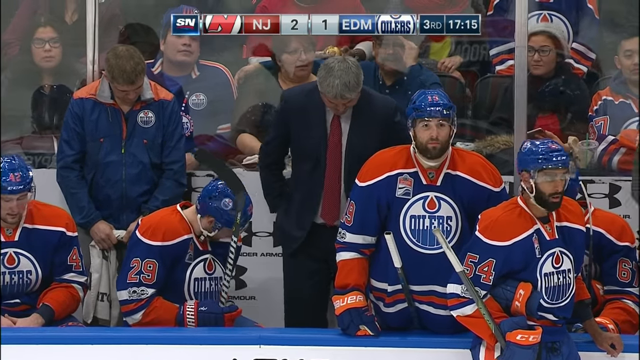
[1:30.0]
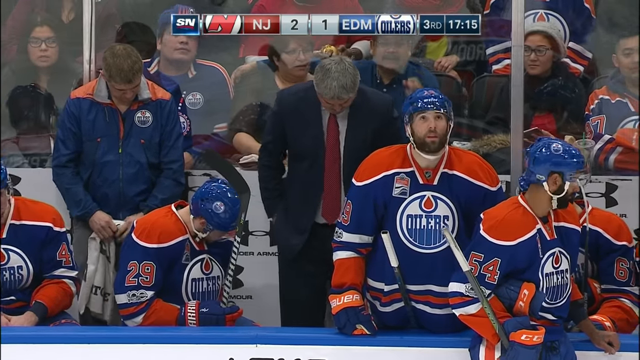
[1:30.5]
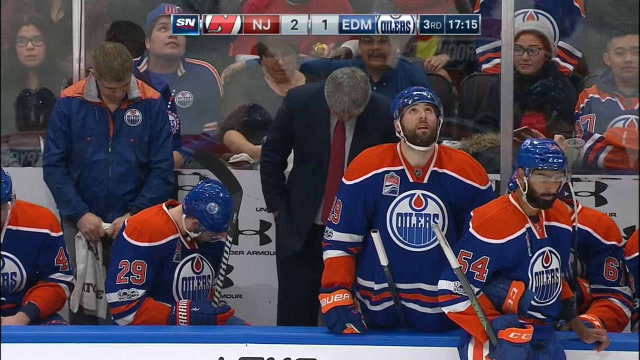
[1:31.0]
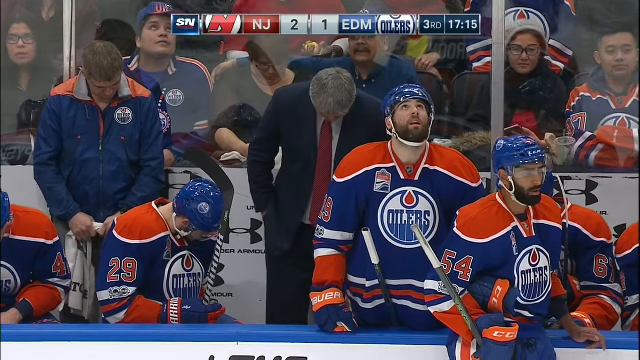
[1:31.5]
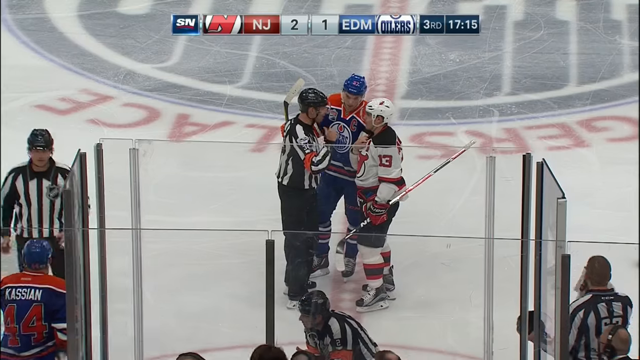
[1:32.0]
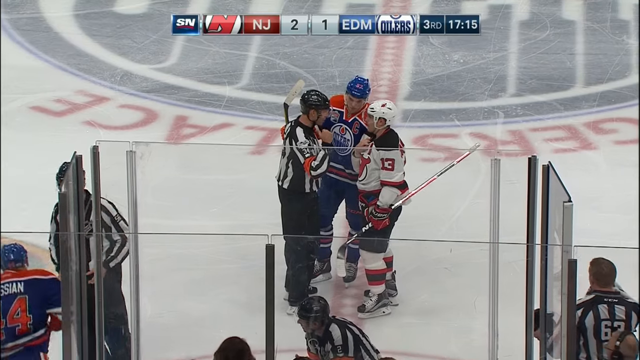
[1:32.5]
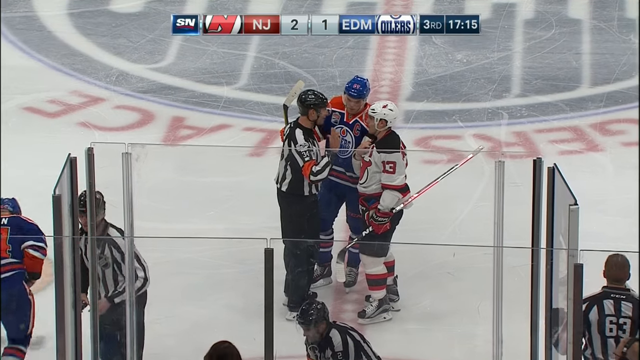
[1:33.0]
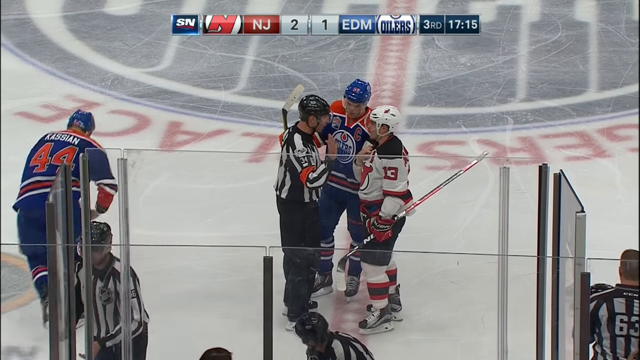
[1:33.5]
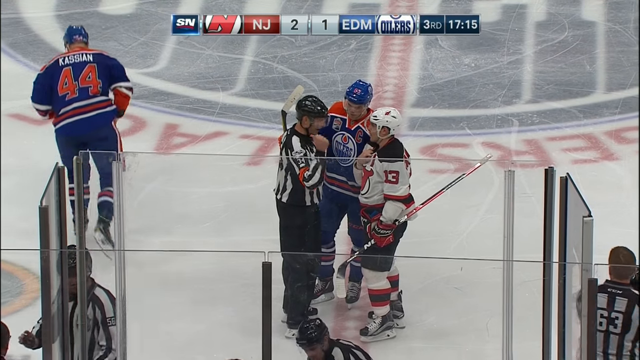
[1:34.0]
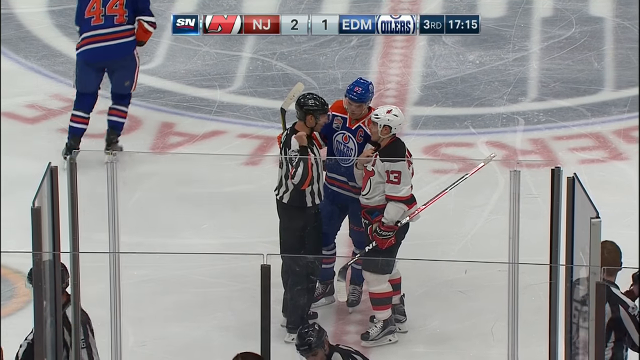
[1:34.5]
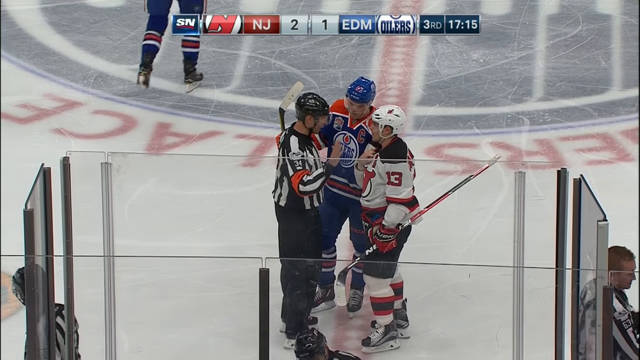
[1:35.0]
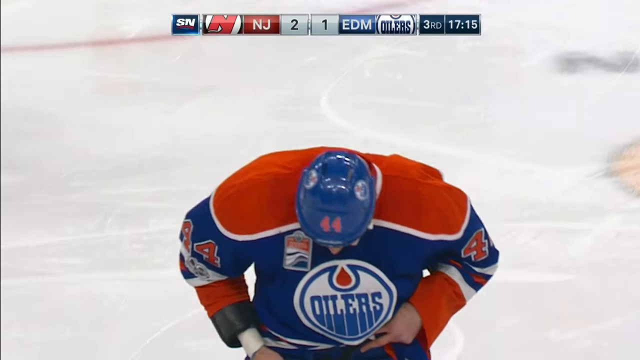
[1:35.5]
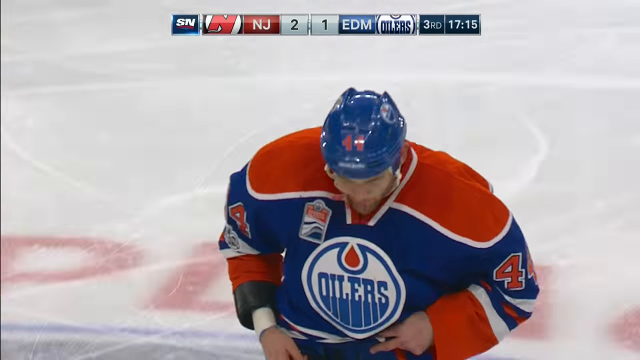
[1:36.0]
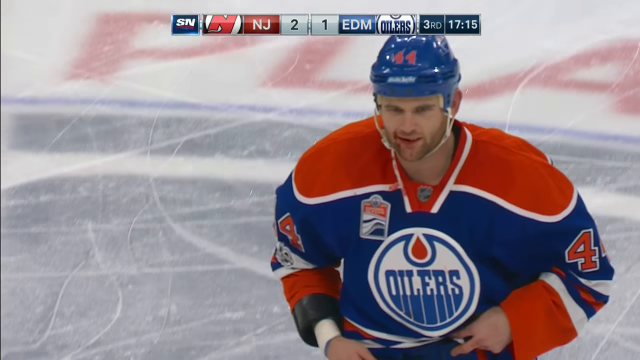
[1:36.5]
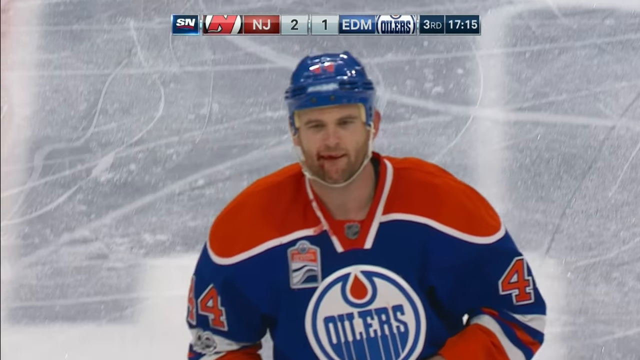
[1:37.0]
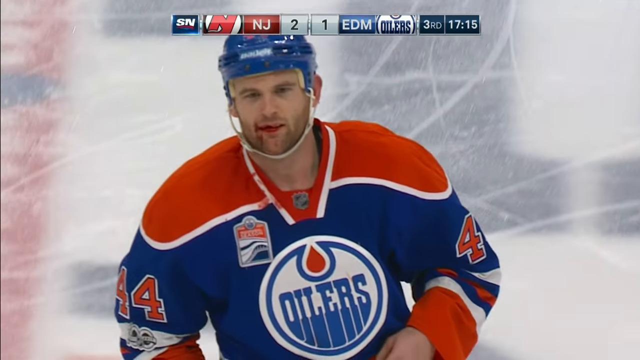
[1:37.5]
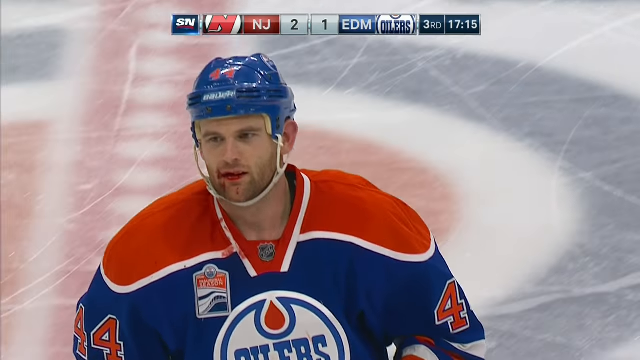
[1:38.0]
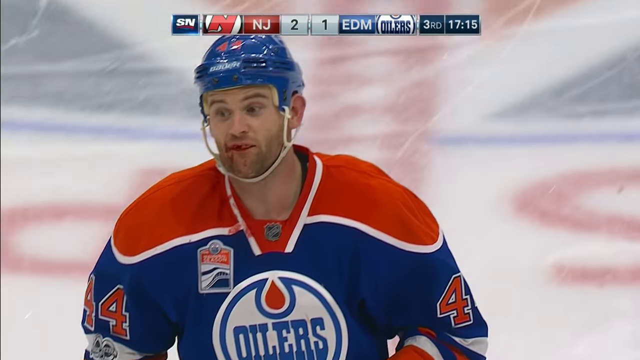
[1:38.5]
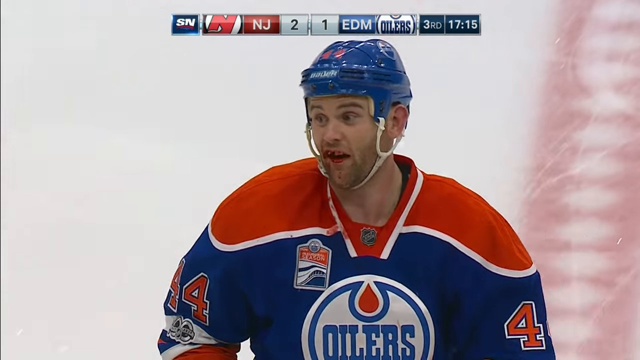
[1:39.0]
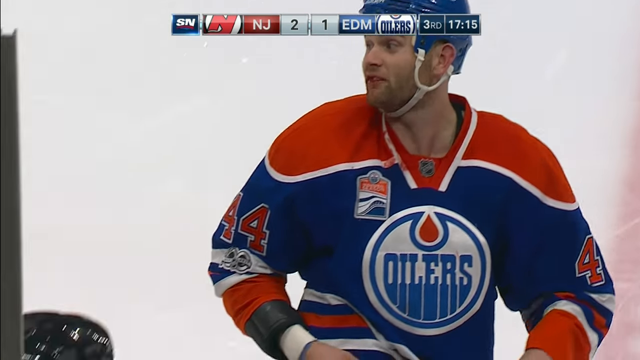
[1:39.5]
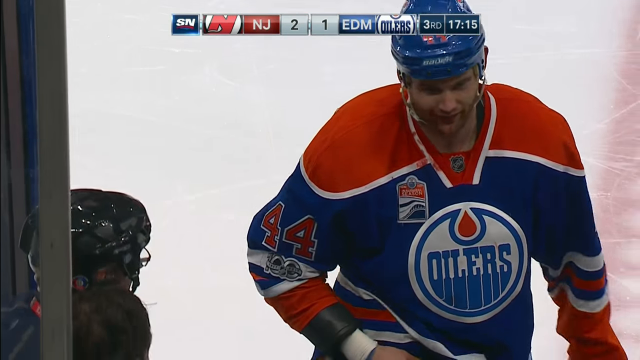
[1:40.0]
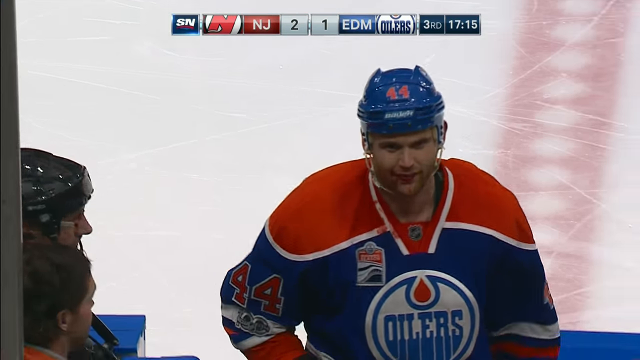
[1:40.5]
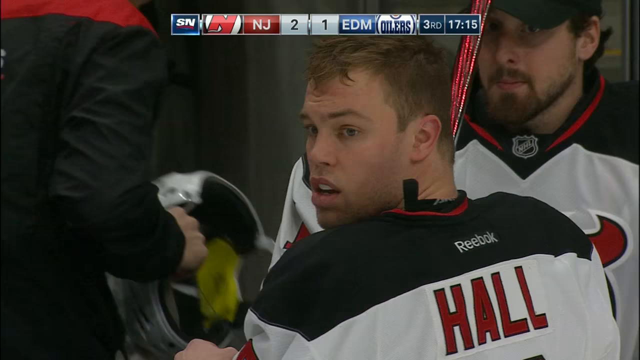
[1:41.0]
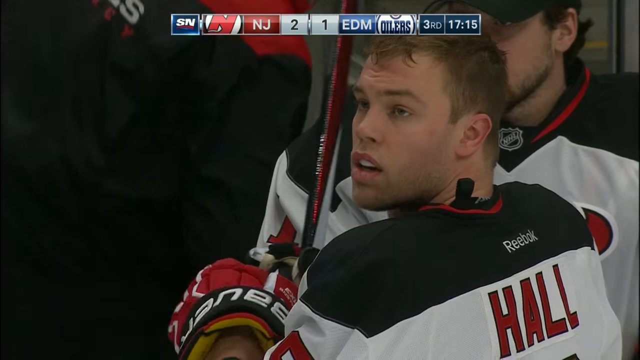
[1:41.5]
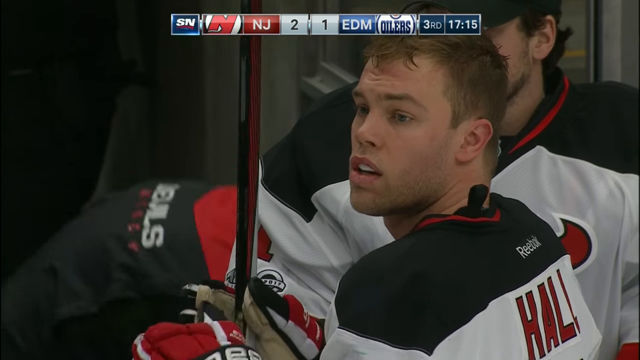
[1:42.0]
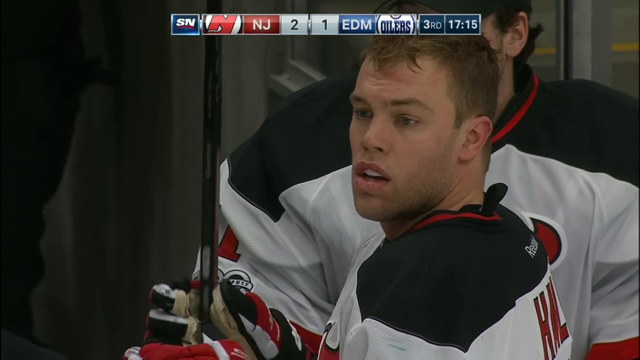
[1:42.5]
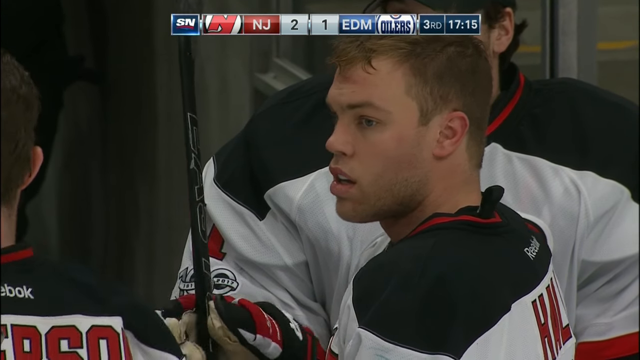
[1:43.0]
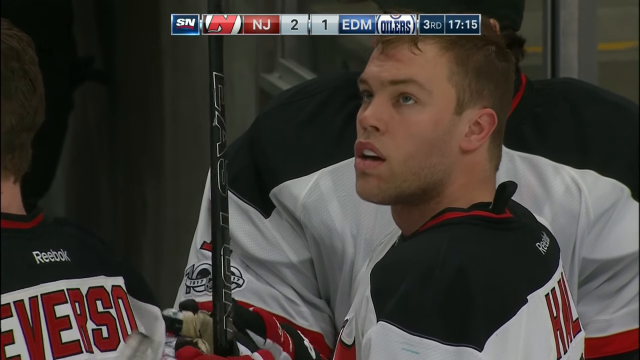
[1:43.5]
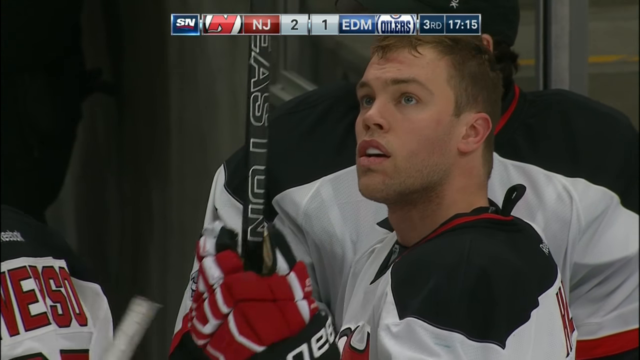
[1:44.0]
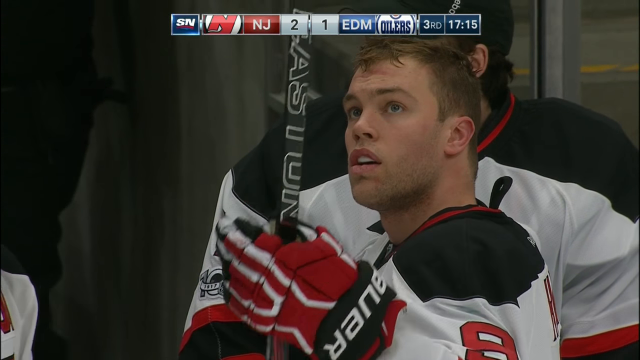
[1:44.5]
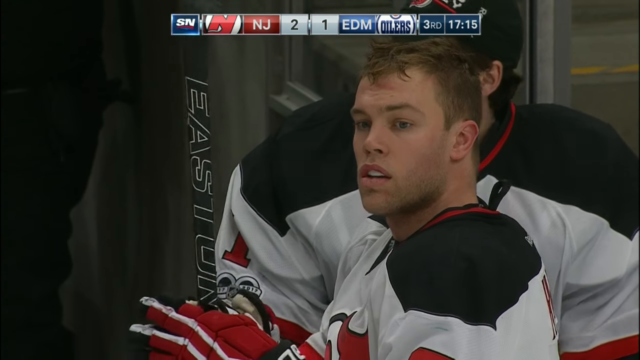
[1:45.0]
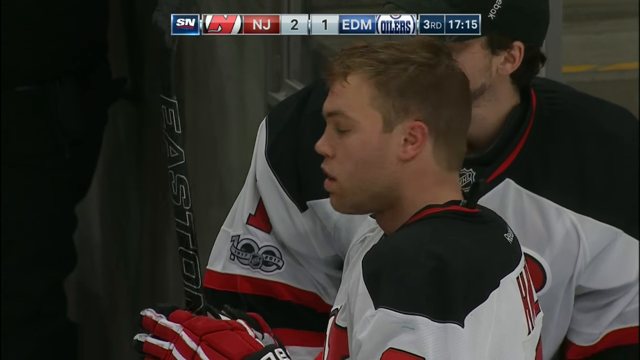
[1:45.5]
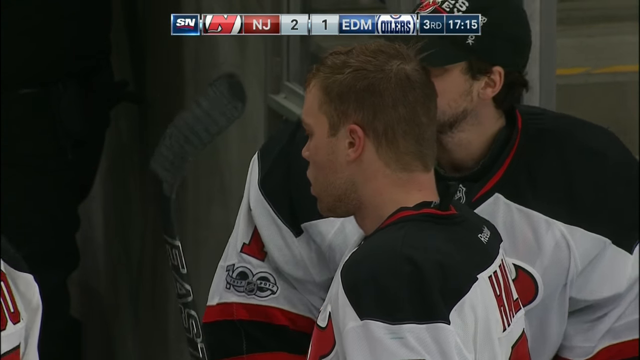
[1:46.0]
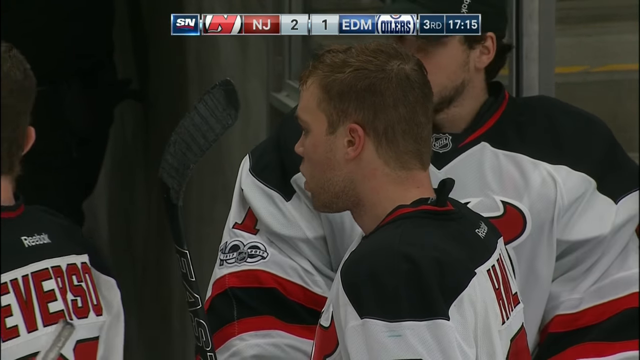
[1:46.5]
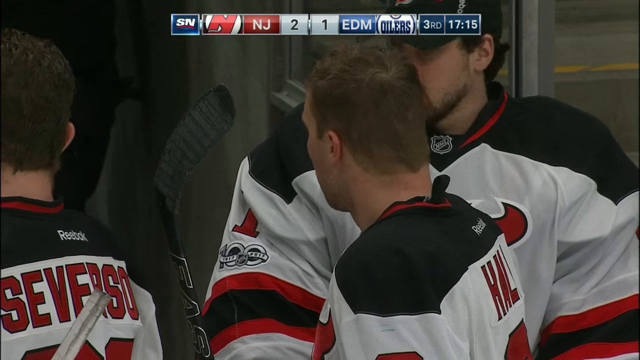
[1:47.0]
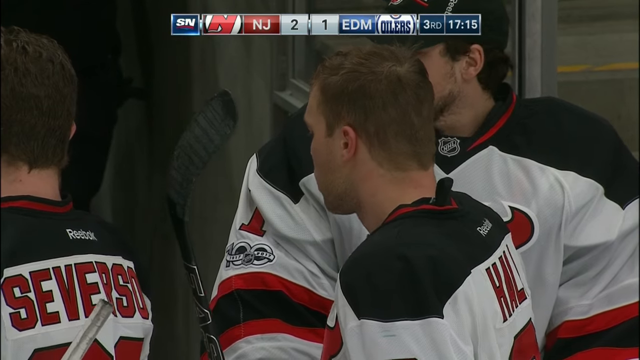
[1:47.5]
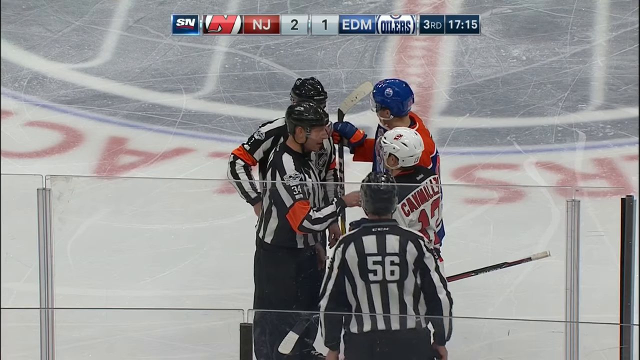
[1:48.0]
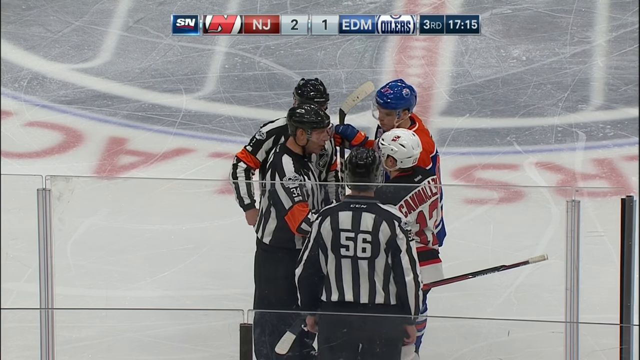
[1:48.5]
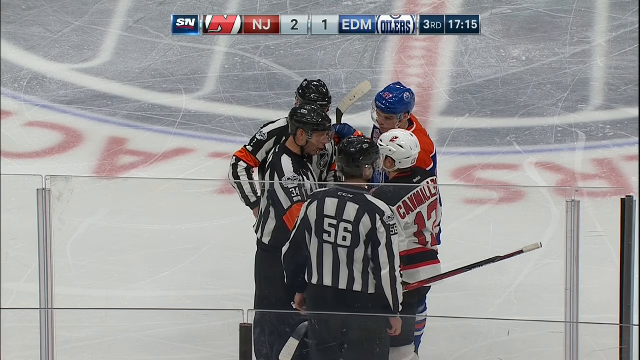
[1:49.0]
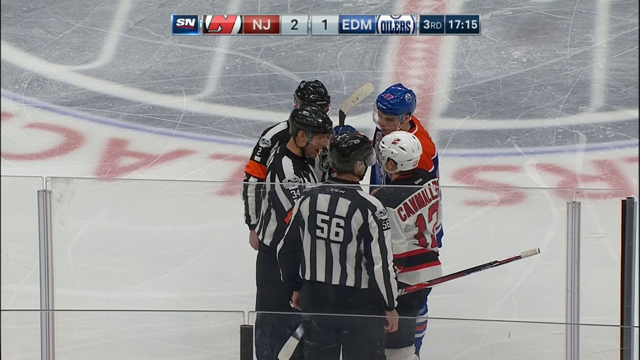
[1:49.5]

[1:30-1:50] The view is of center ice. Blood leaks from the mouth and lips of an Oilers player, who is missing teeth. A New Jersey Devils player, Paul, possibly the captain, has gel in his hair. The referees are at center ice talking it over.